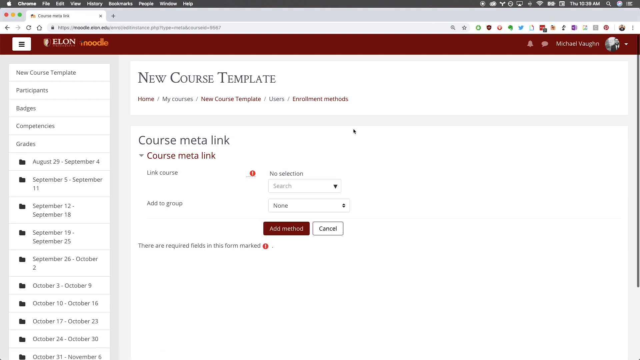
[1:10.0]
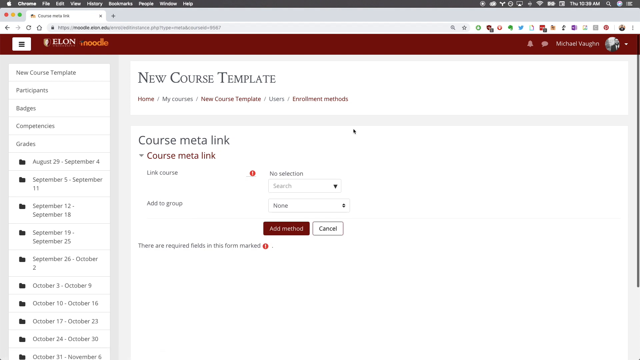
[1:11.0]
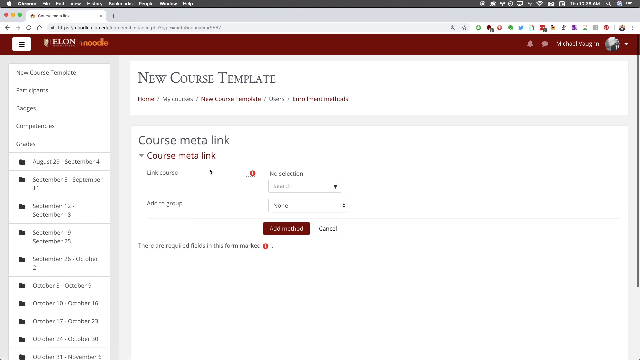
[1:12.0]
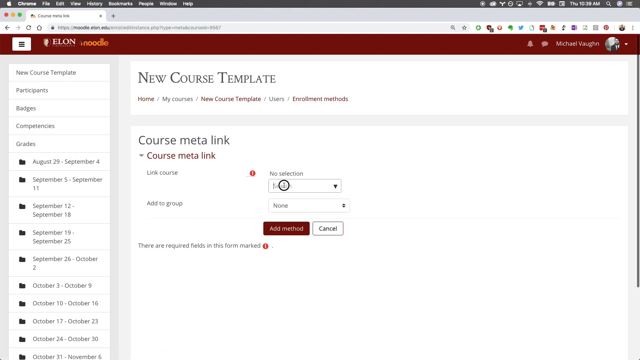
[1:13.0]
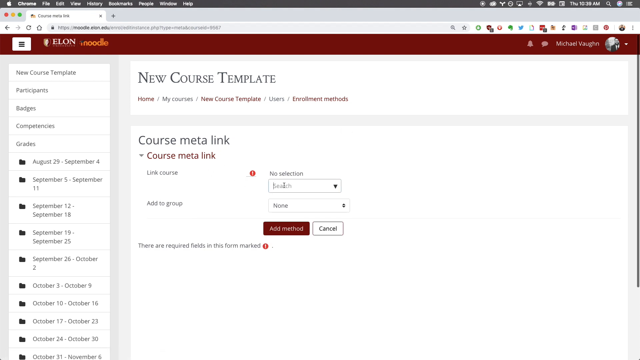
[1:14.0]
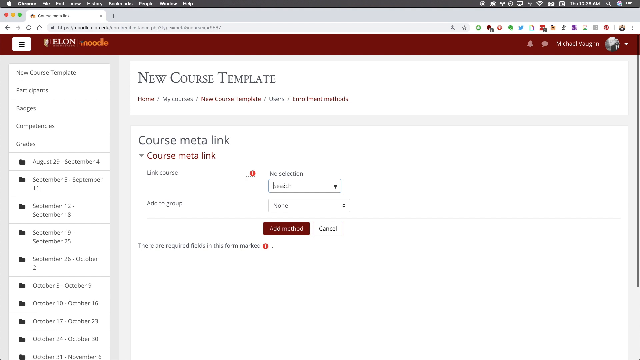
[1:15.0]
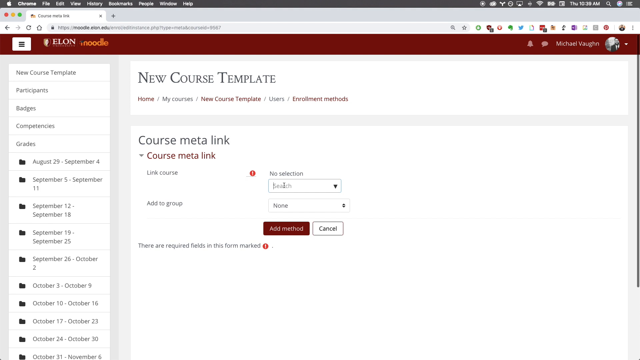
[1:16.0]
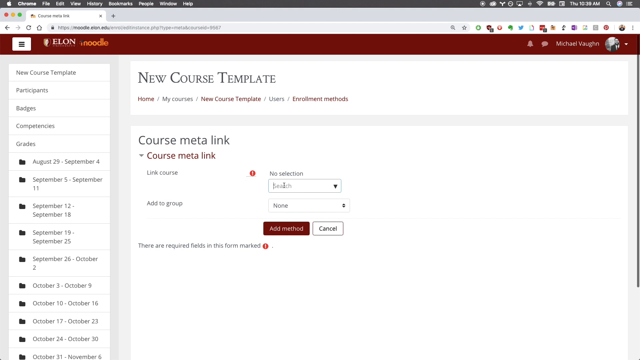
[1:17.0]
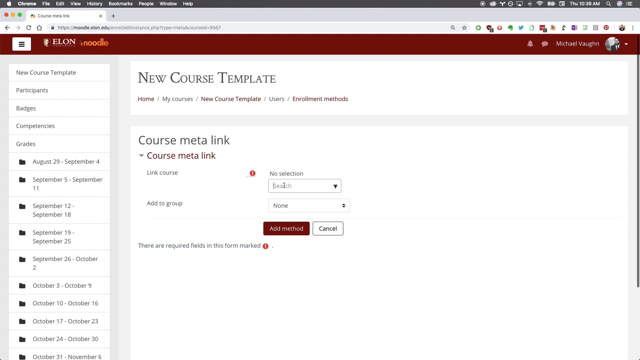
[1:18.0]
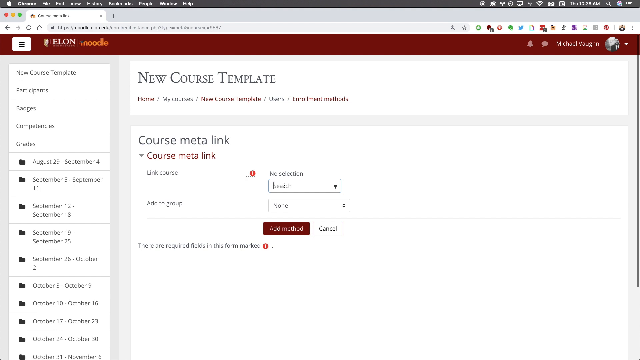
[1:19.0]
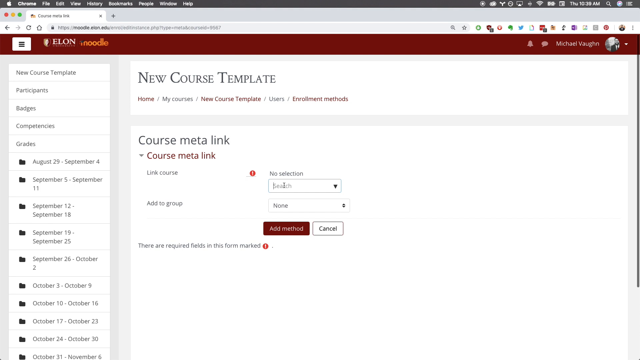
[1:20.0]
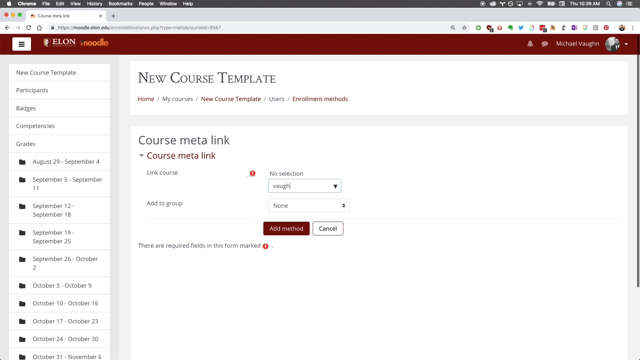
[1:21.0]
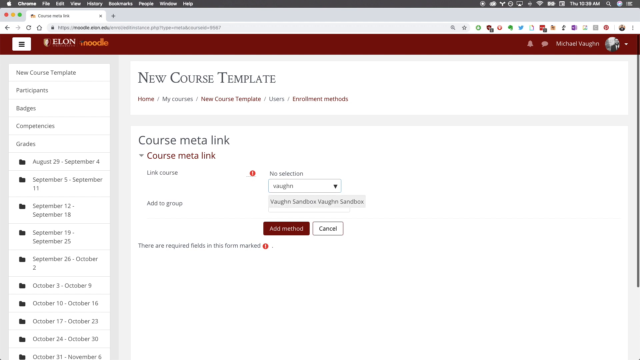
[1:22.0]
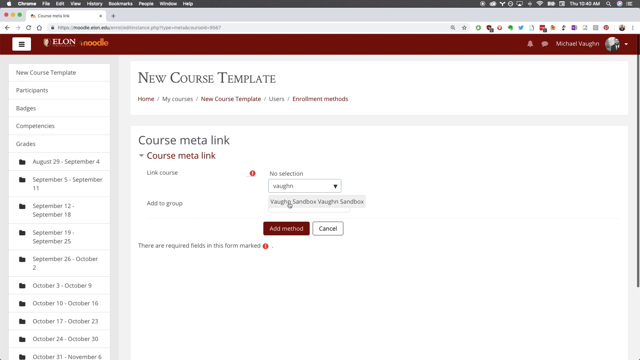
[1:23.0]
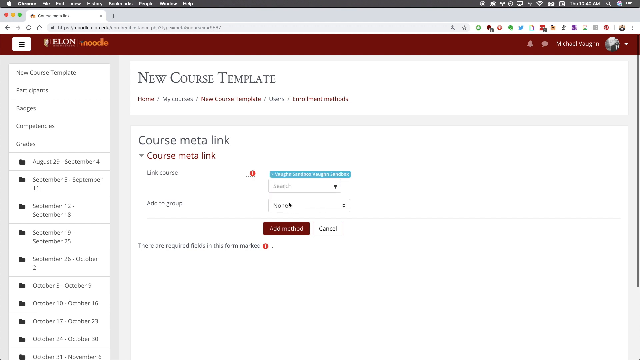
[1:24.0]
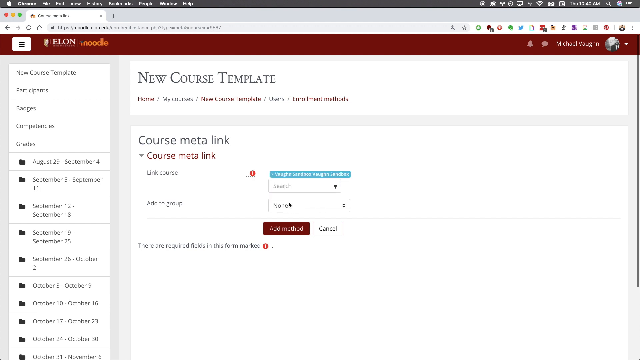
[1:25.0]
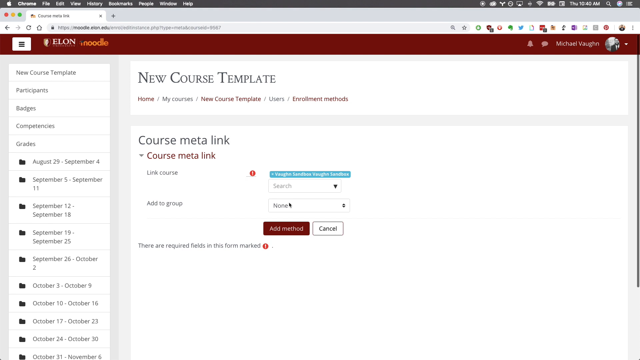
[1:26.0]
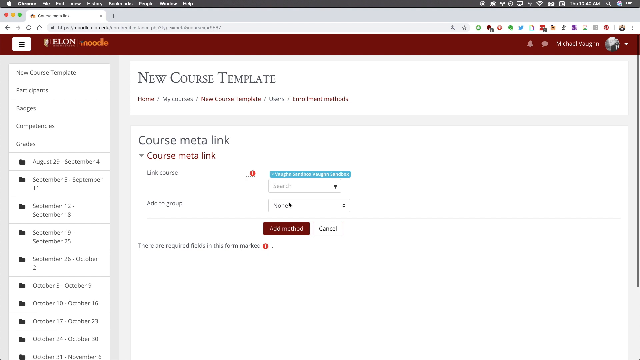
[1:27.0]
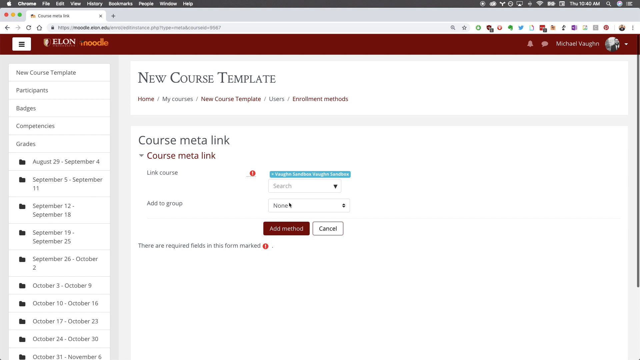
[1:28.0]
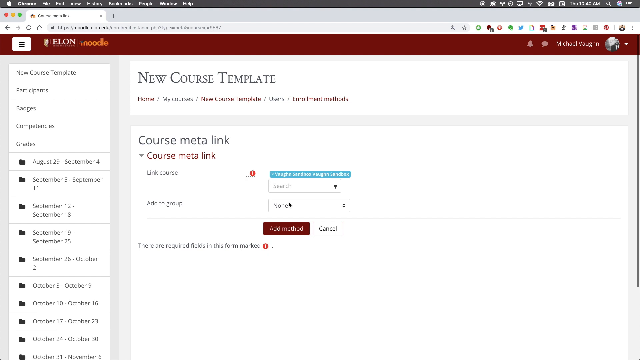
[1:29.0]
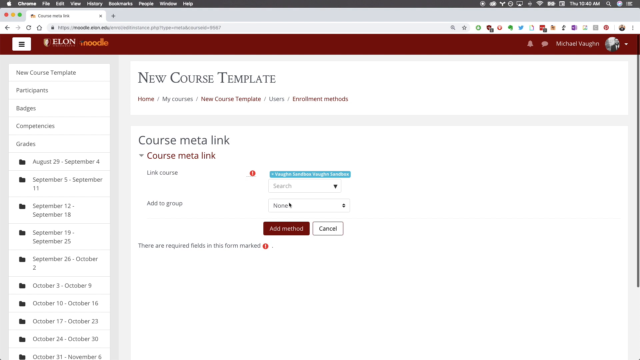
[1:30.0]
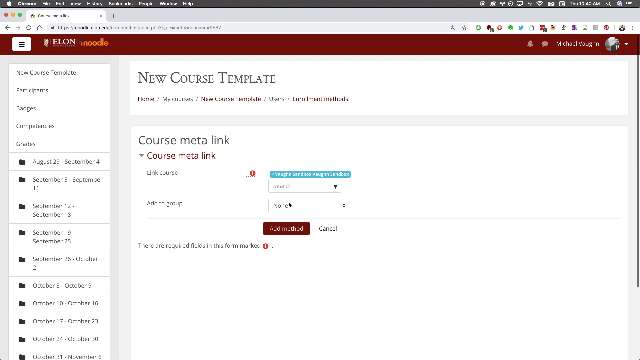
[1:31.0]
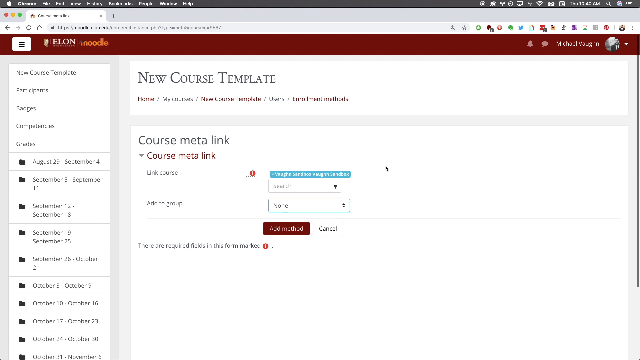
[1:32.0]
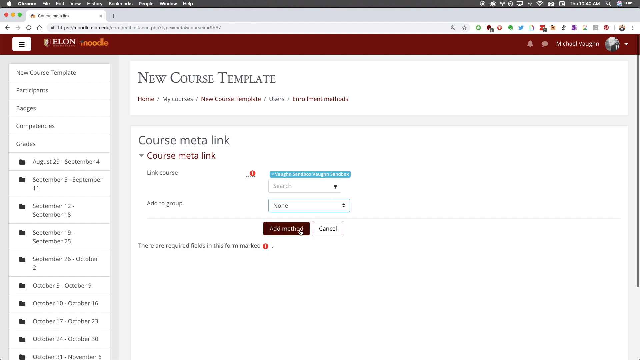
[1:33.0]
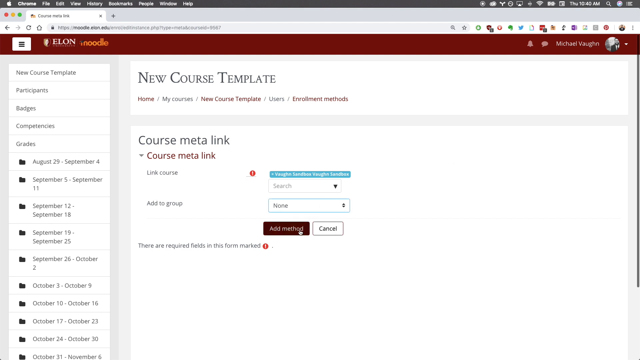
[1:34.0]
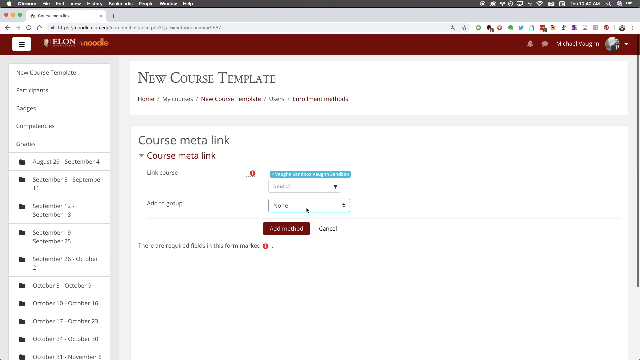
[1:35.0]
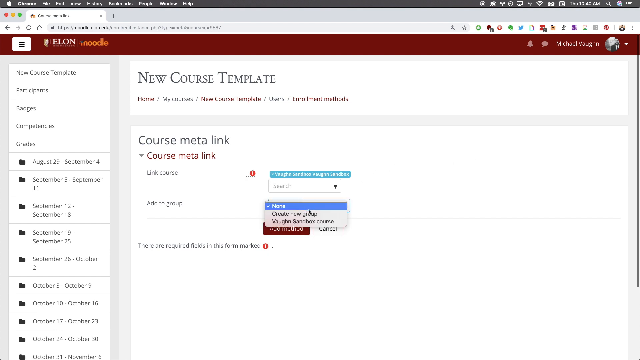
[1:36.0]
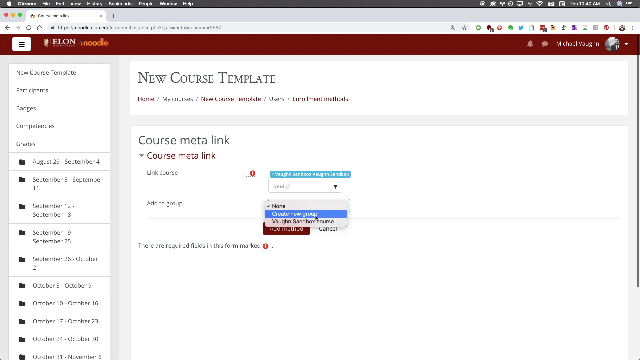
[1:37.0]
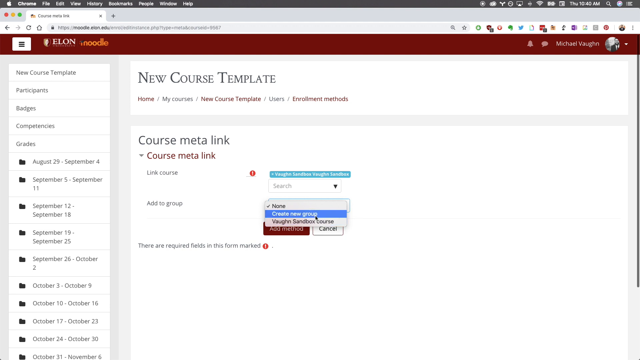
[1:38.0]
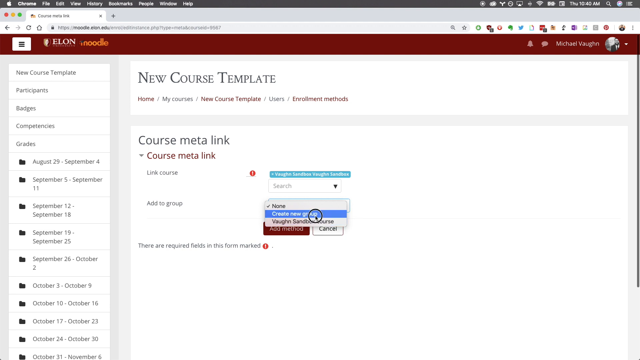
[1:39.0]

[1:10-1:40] A page says "course meta link"; it is a form with a drop-down and buttons. The user clicks the link course row, which has a text box, and types "Vaughan". An autocomplete appears showing "Vaughan Sandbox" twice, and the user clicks it, after which it is highlighted as a turquoise row above the link course drop-down. The user moves the mouse over the red "add method" button, then moves to the "add to group" drop-down box, which currently says "none", and clicks the "create new group" button. The website's header is a dark burgundy-red, and the site has a red theme. It looks like the Google Chrome browser, on an Apple laptop. On the left-hand side are many different dates in folders, such as "August 29th to September 4th".